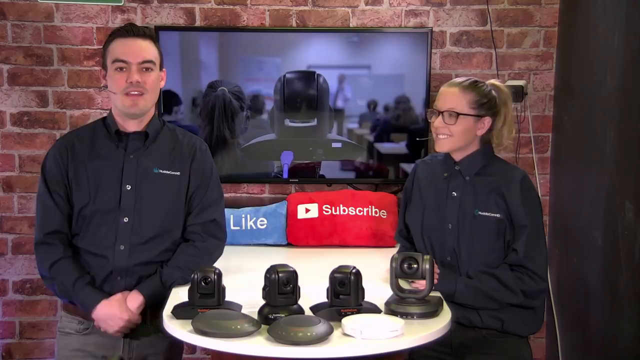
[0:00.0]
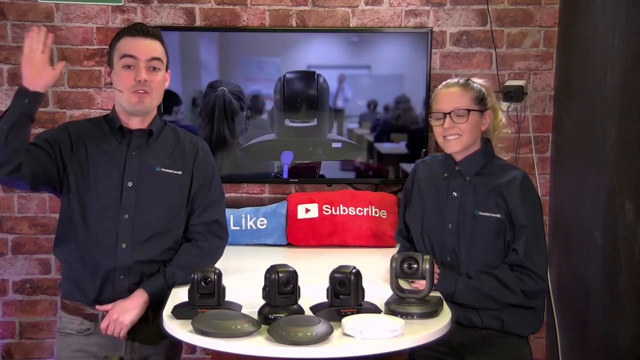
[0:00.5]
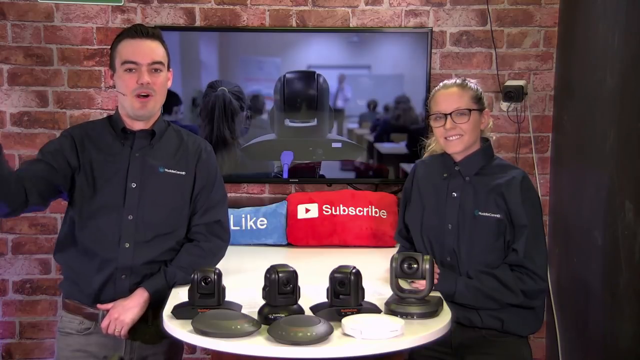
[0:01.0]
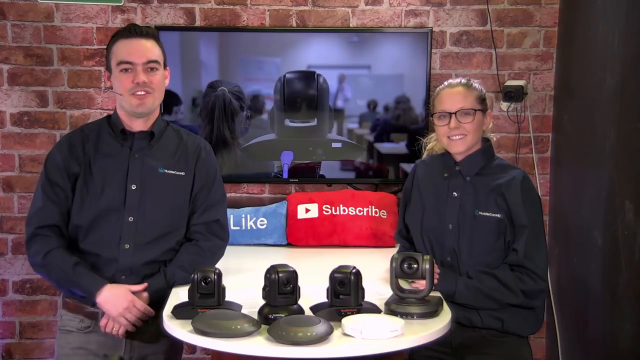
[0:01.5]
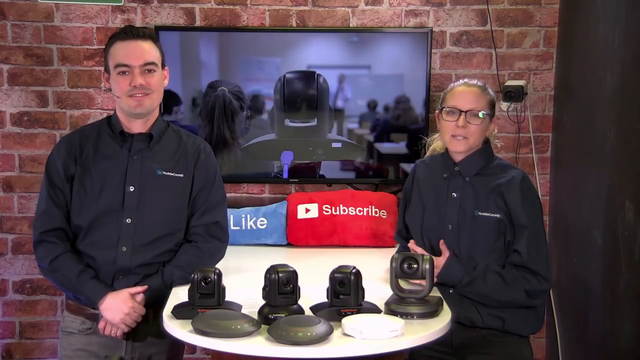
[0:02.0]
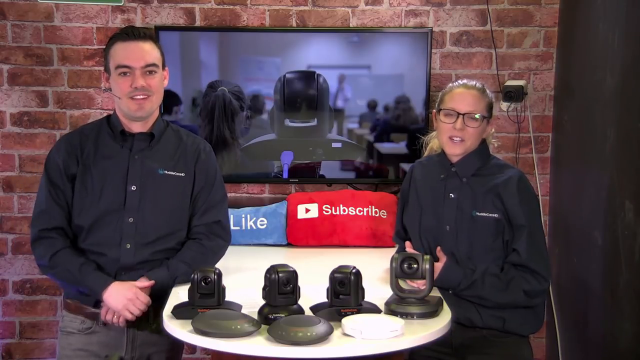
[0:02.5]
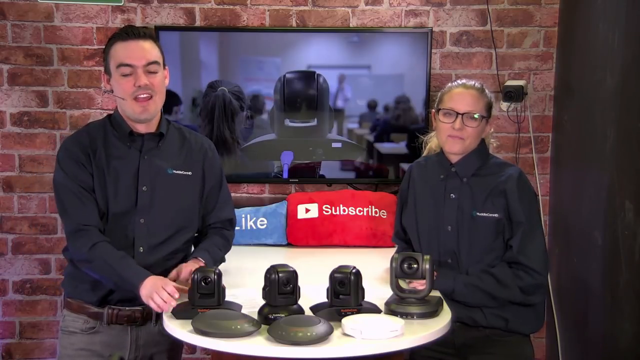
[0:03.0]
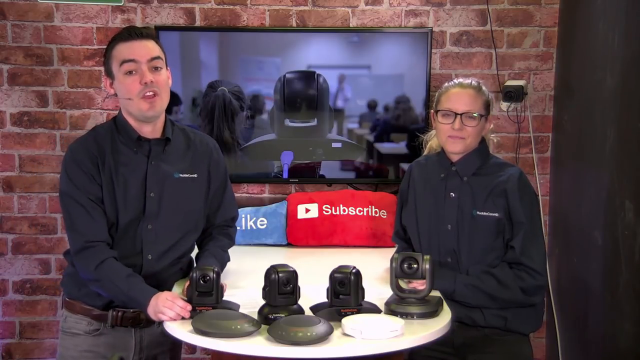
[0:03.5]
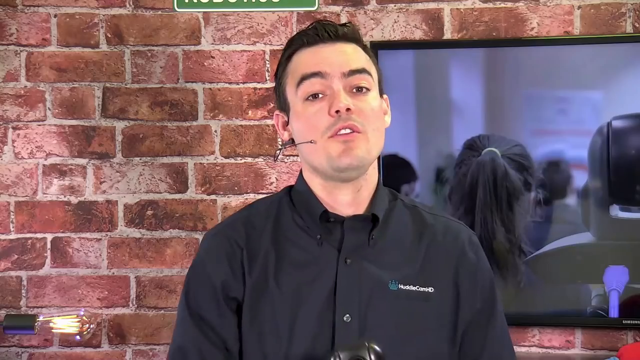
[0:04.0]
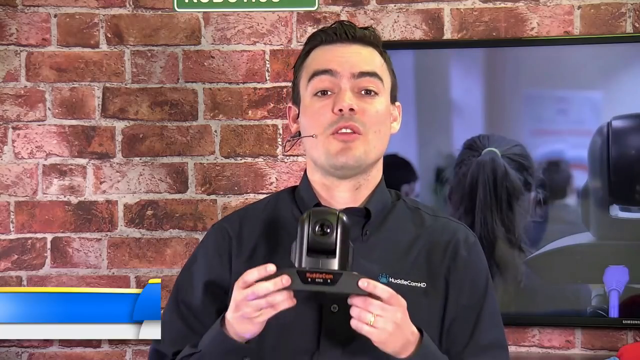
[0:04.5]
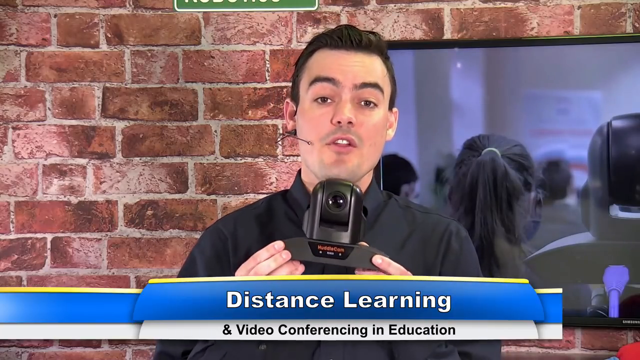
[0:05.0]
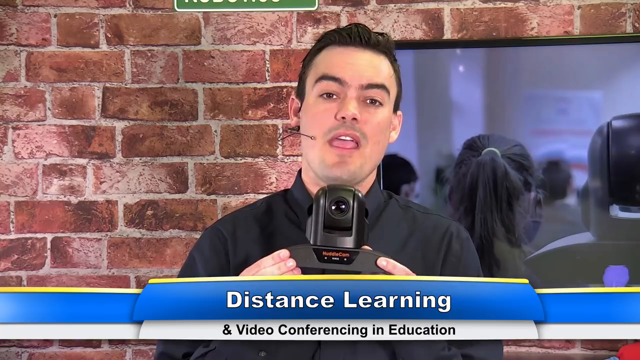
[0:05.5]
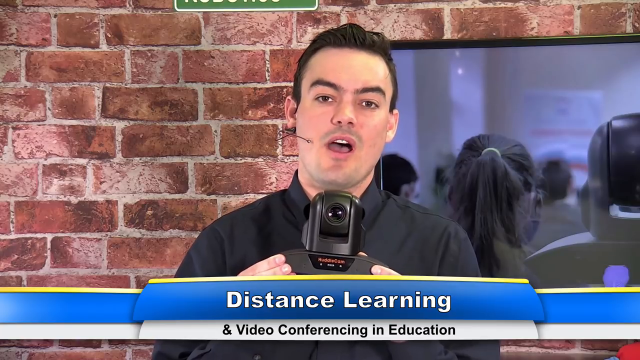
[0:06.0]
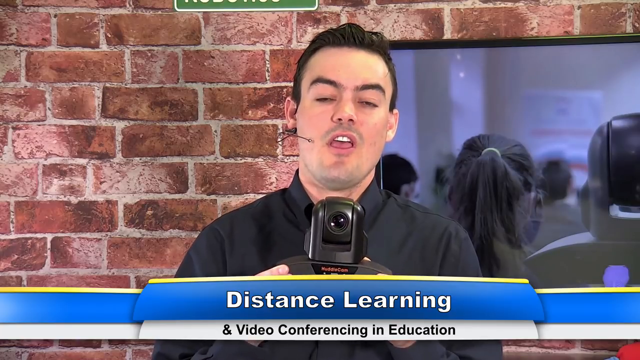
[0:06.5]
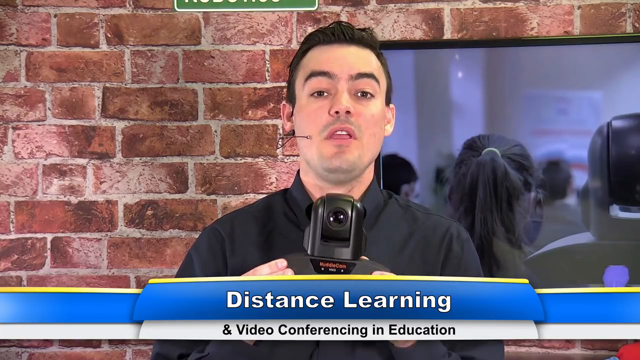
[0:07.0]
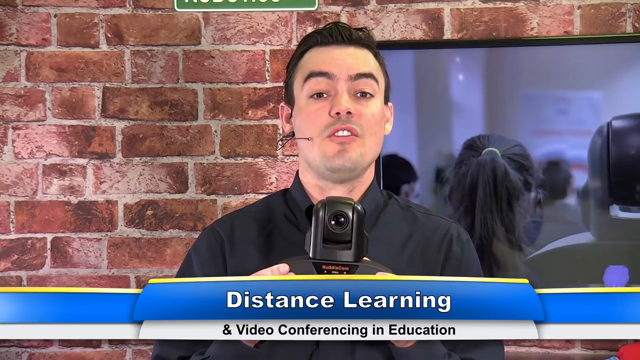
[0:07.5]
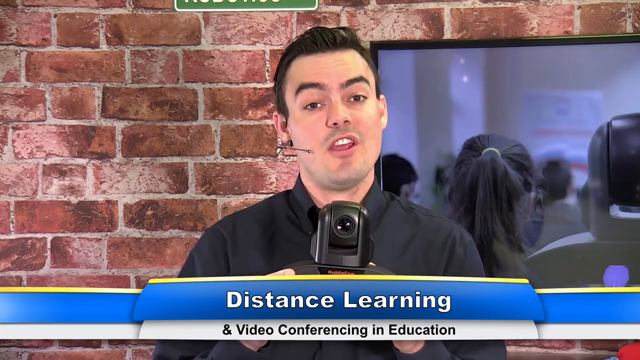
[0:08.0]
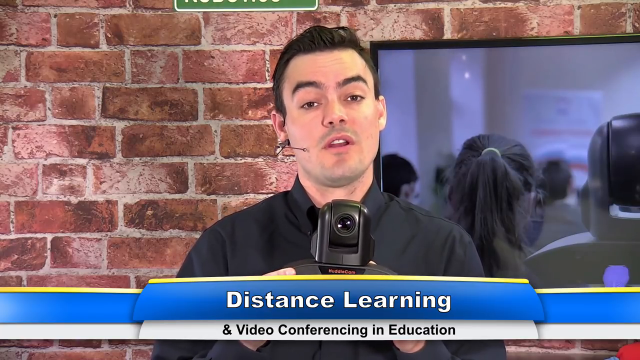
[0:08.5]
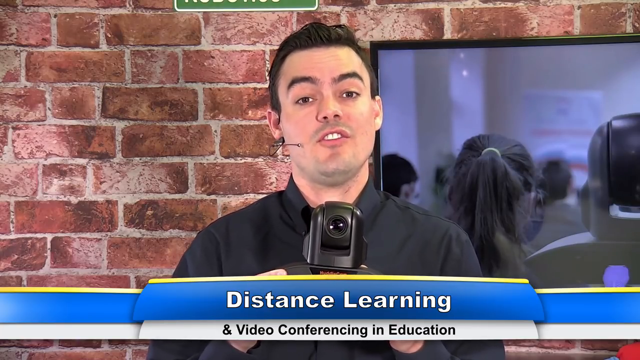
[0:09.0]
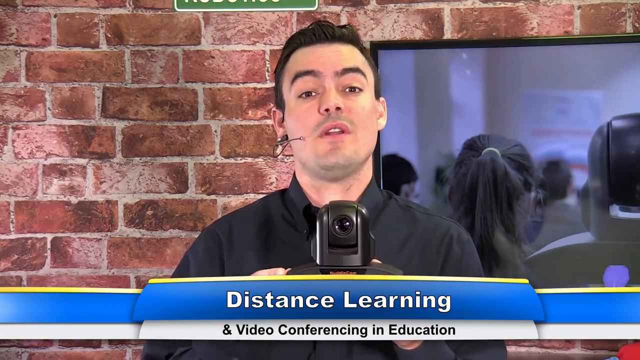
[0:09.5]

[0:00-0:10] Two people are in front of a brick-wall-style background with a TV screen. Down below are four camera-like objects, three oval speaker-like objects, and beneath them a small blue pillow that says "like" and a red pillow that says "subscribe." A woman on the right wears a black button-up collared shirt and glasses, with her hair in a ponytail. On the left, a man talks, and the camera zooms in on him. Text below reads "distance learning and video conferencing and education." He holds one of the camera devices with both hands in front of his neck area. He has a microphone in his right ear and continues to talk to the camera.